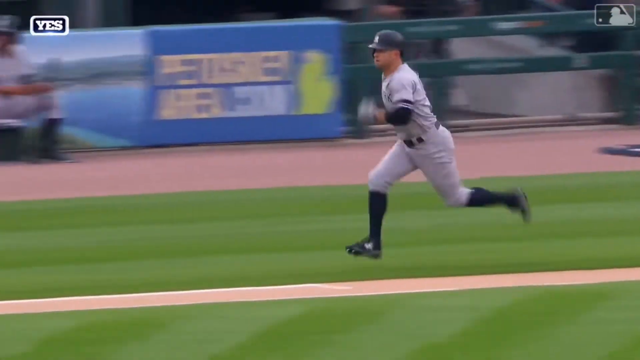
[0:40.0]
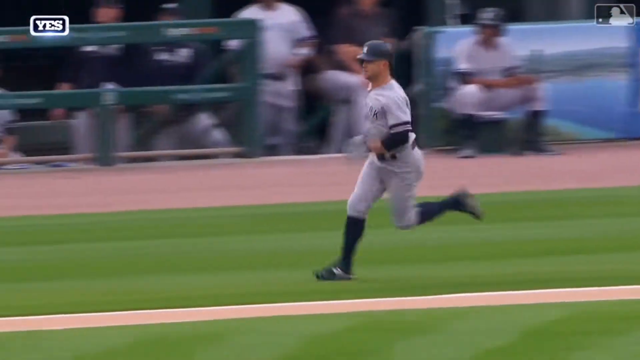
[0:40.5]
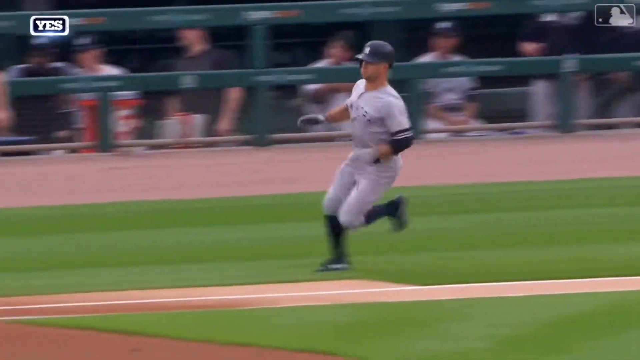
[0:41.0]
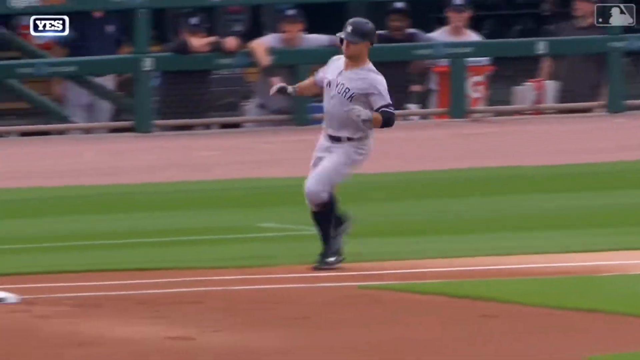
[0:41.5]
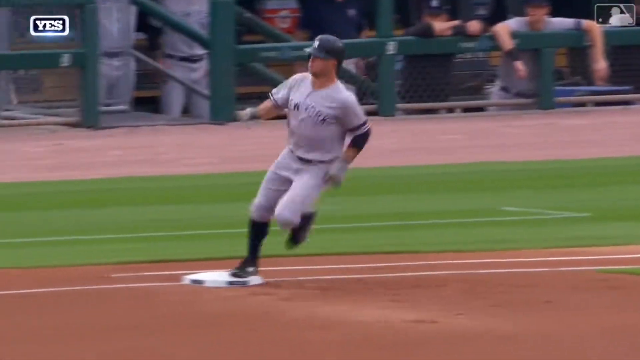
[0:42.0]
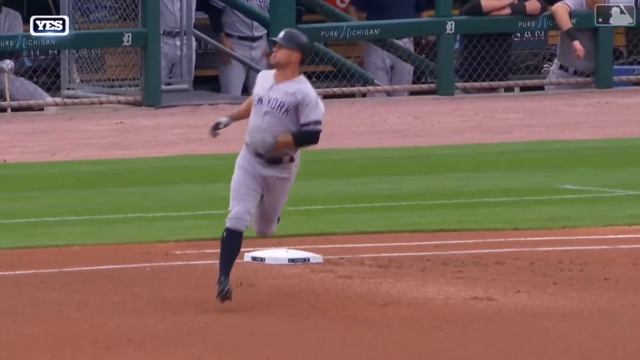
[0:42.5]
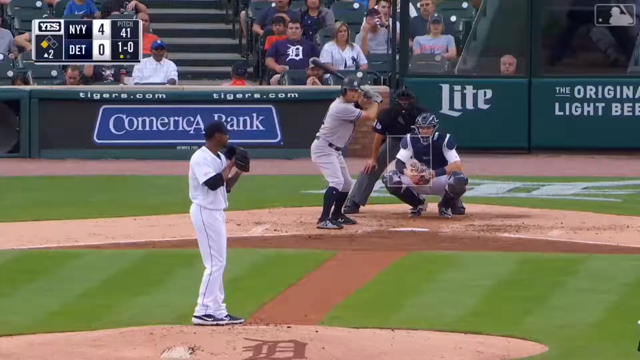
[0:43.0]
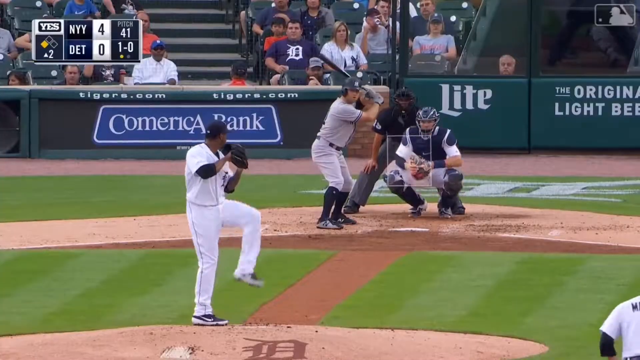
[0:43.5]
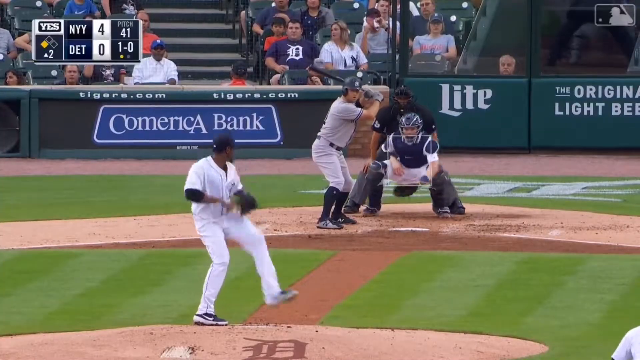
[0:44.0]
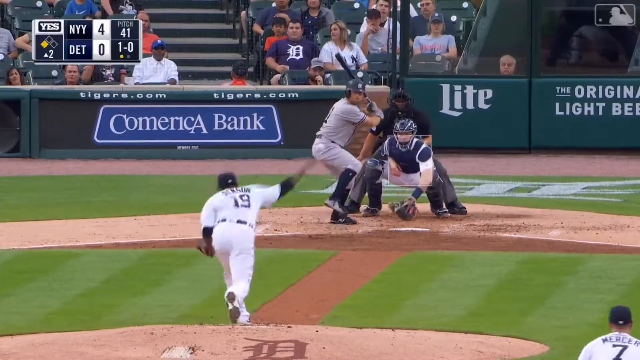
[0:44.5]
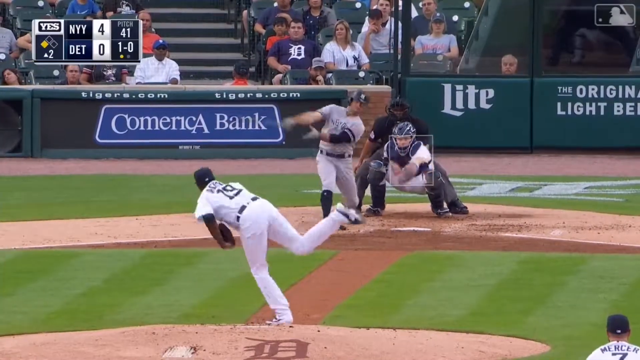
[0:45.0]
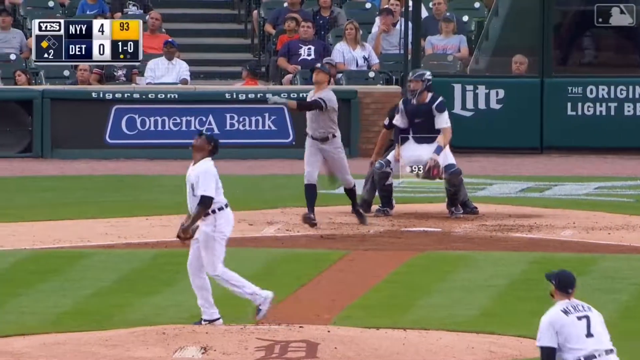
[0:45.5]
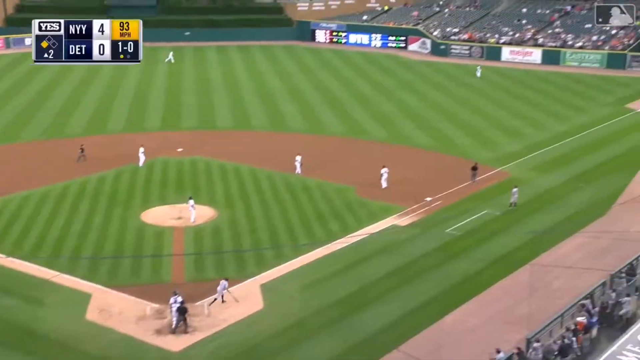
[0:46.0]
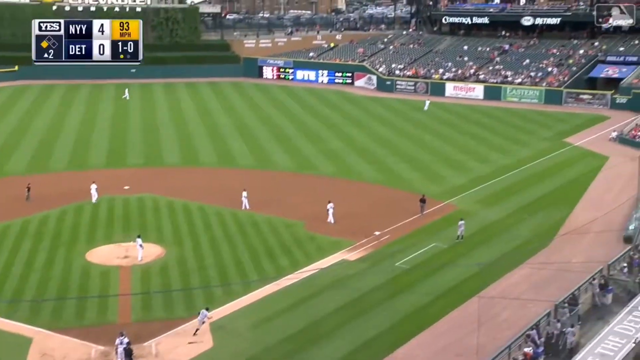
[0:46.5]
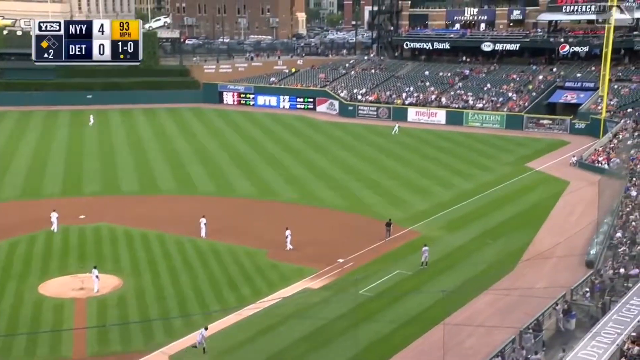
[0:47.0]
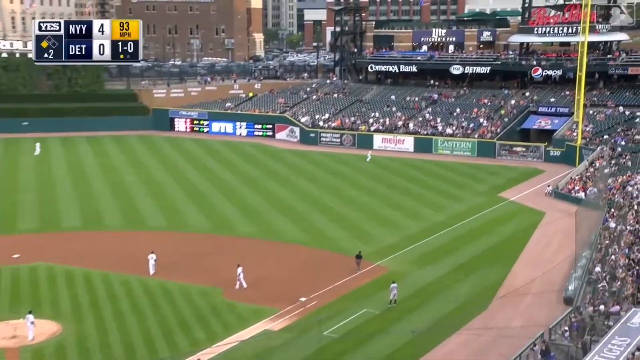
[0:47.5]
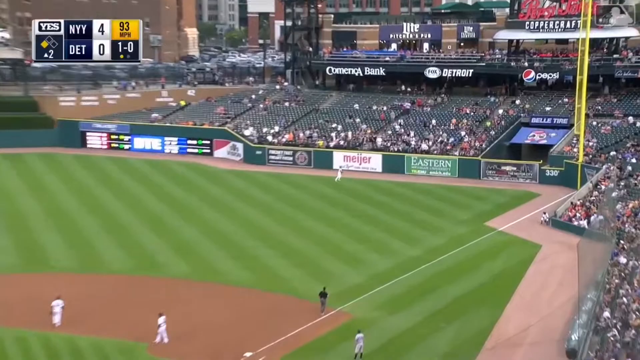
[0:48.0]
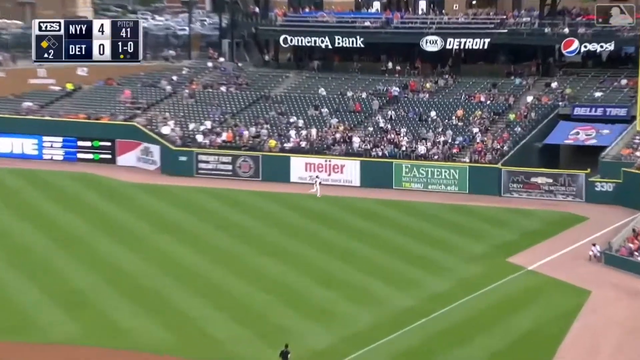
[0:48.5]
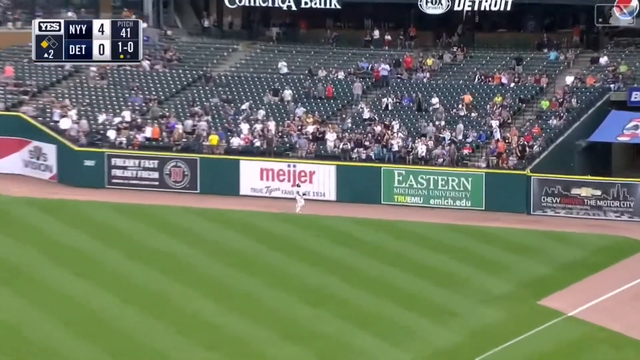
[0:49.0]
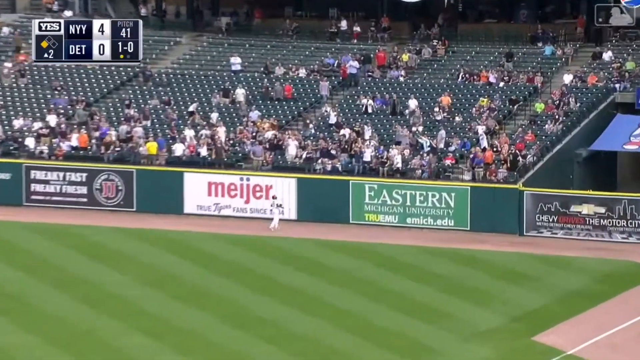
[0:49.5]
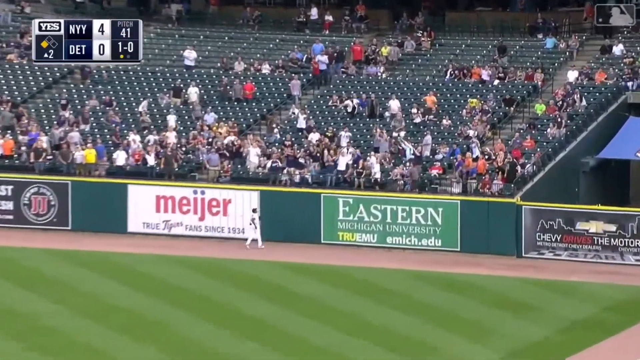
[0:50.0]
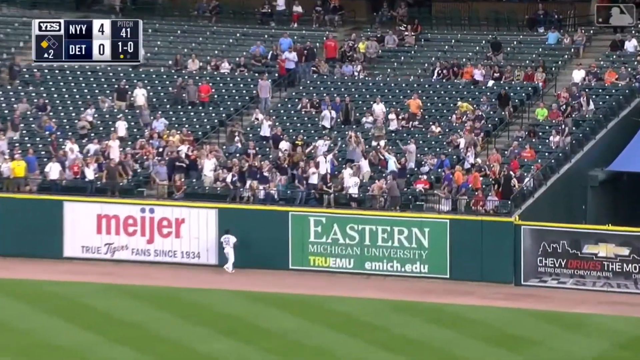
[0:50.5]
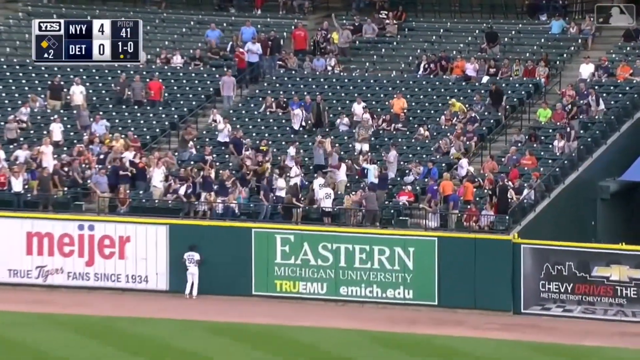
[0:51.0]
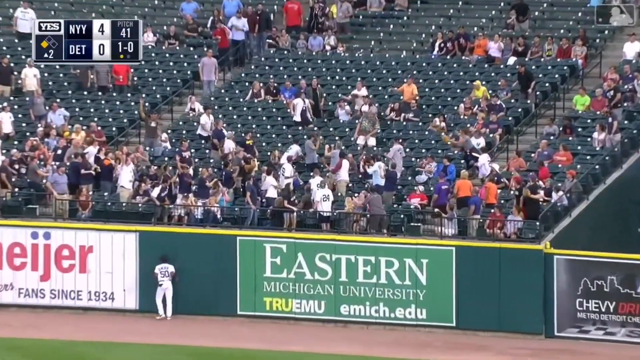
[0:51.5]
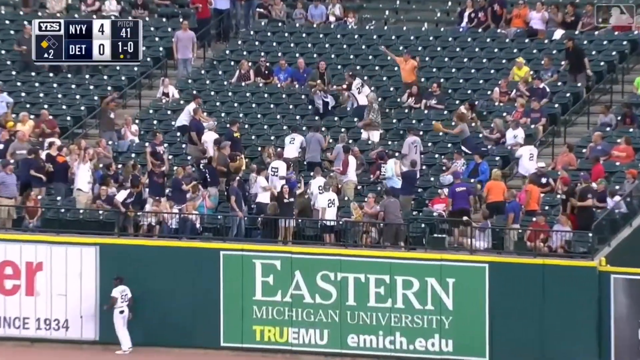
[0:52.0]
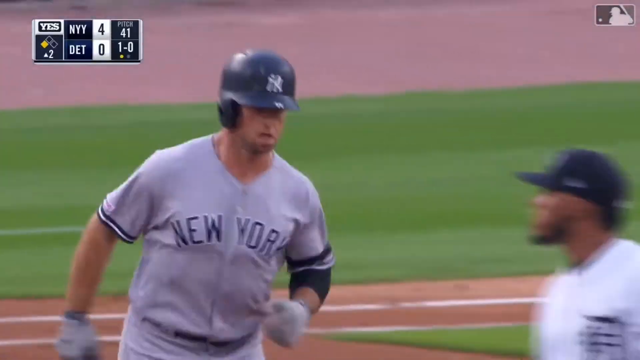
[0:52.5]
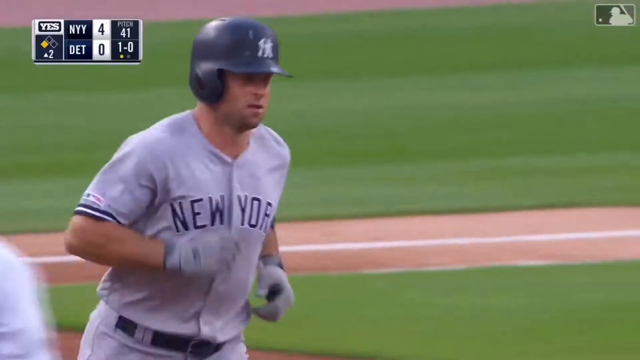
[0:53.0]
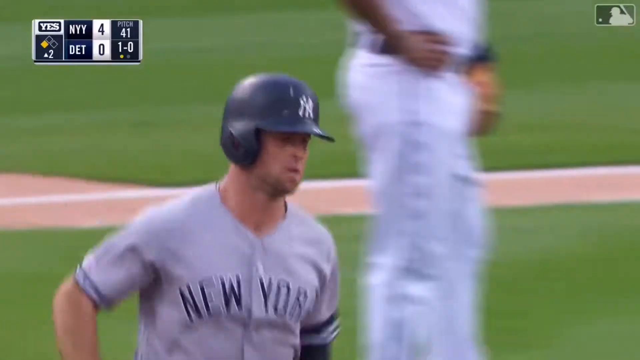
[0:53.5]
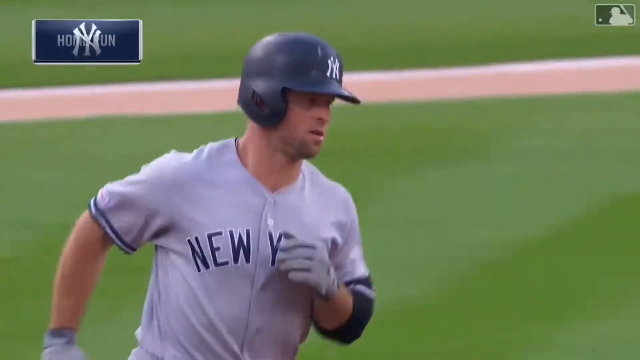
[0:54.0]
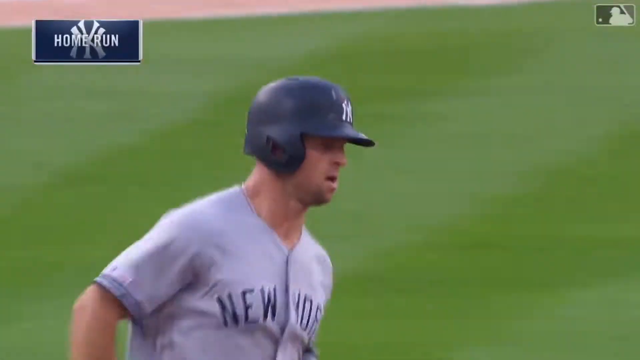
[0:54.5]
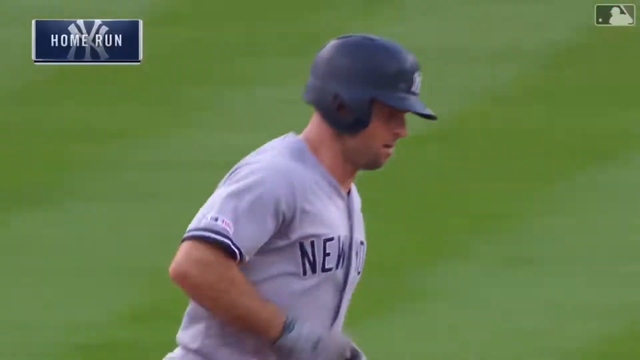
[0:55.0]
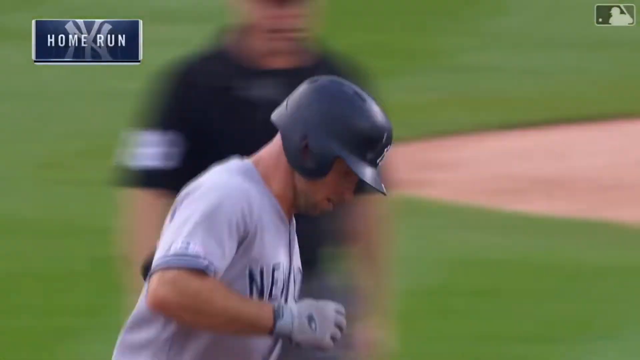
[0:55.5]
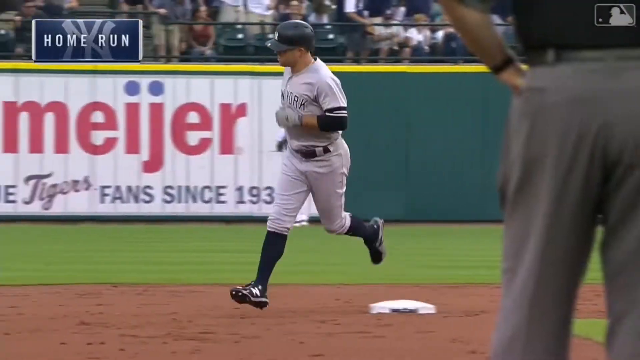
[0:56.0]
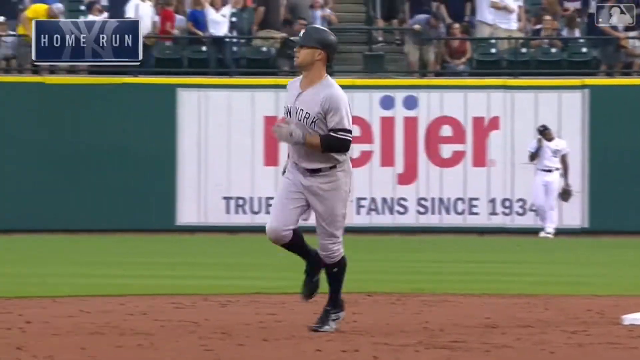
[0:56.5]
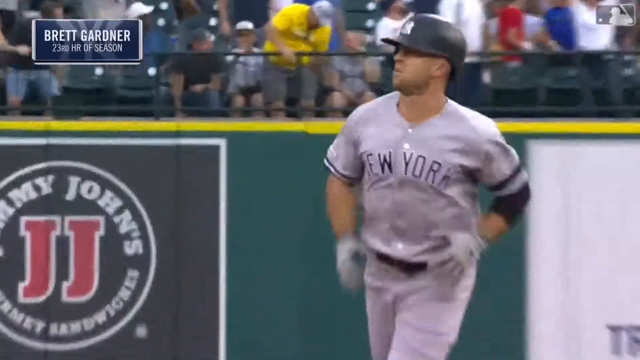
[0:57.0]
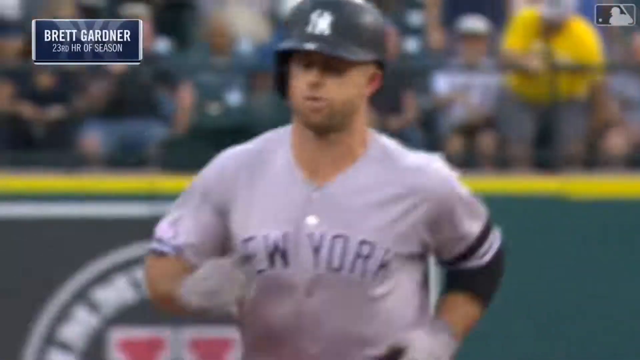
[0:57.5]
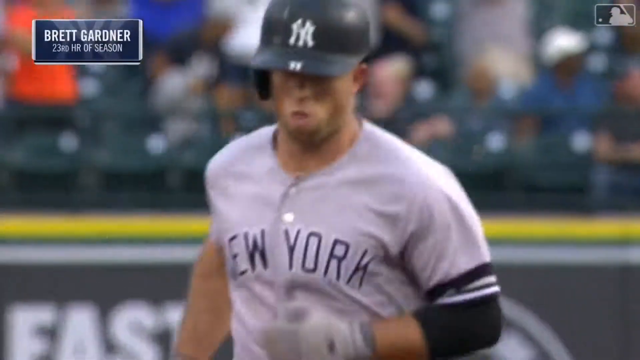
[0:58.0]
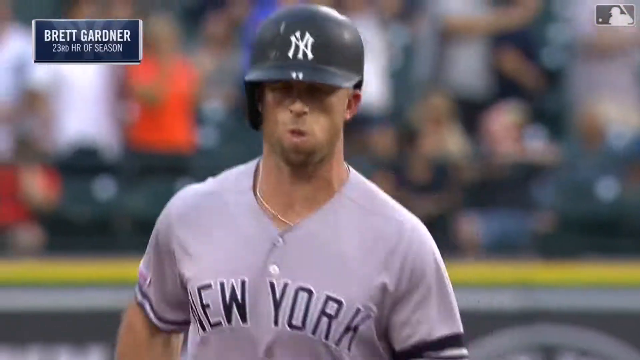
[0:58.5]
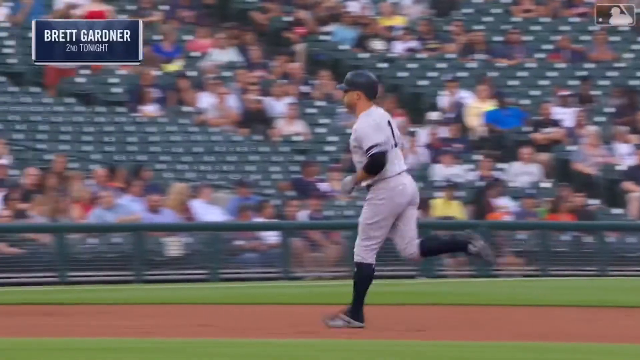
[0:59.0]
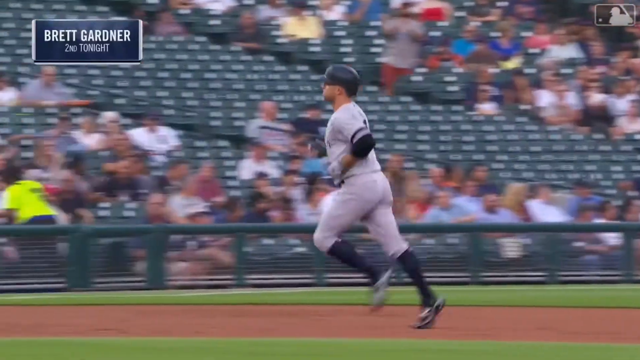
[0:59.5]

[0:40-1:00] A close-up camera view, apparently a replay, shows a player running toward first base after hitting a home run, and the ball going out of bounds. Advertisements are visible, such as Chevy, Eastern Michigan University, "Trueemu" with the letters T-R-U in yellow, and the website "emich.edu". On the left side there is Magier, a company. A big crowd of people gathers, trying to grab the home run ball. The player wearing the New York jersey jogs with his hat down, and the player on the left side is identified as Brett Gardner.